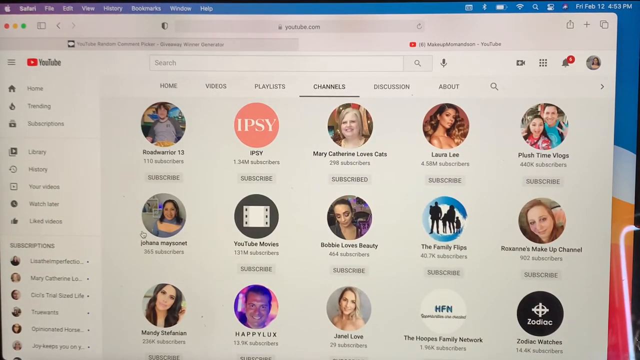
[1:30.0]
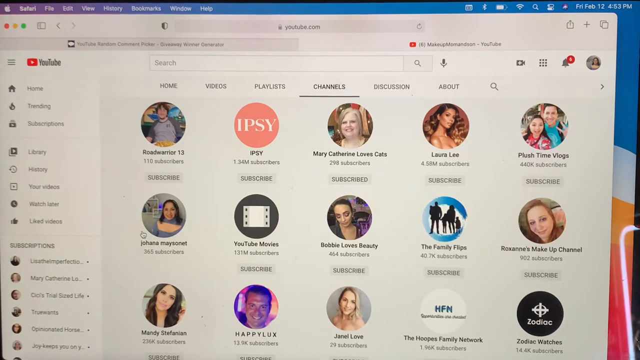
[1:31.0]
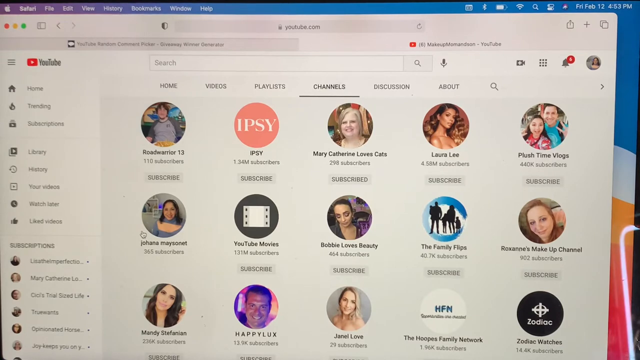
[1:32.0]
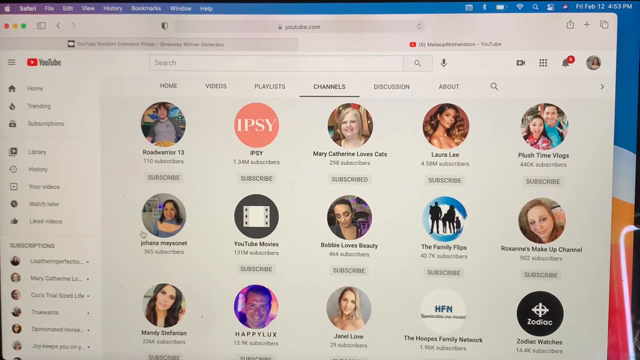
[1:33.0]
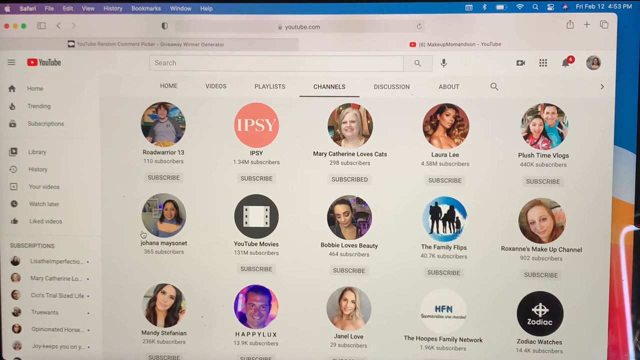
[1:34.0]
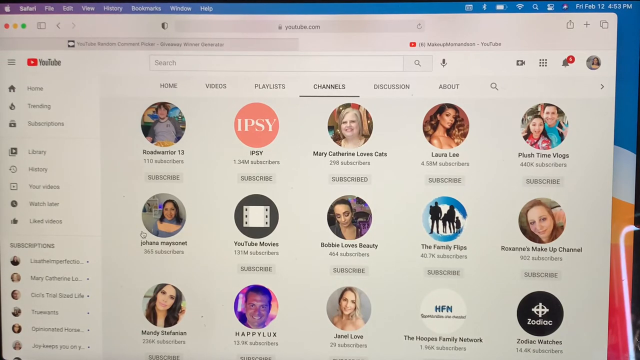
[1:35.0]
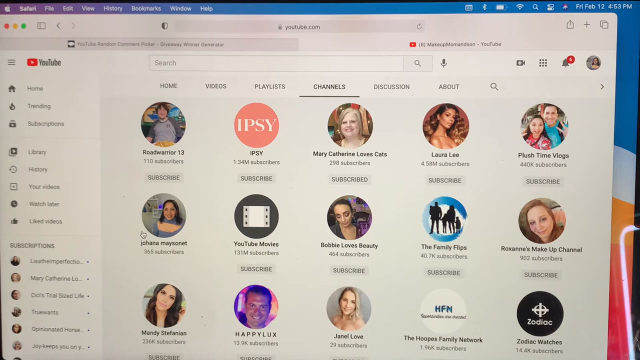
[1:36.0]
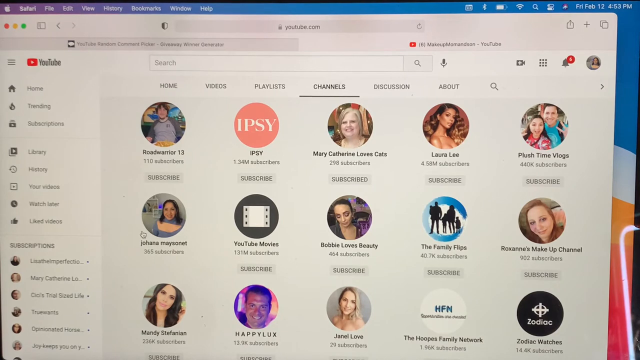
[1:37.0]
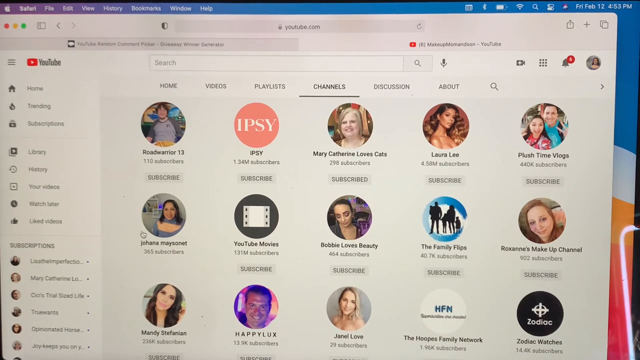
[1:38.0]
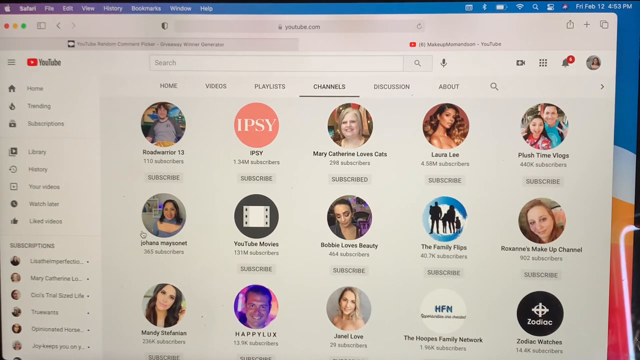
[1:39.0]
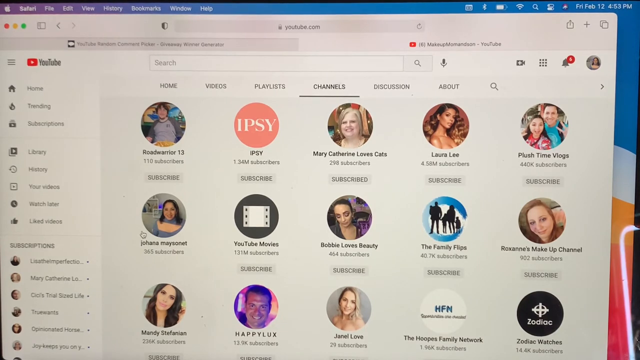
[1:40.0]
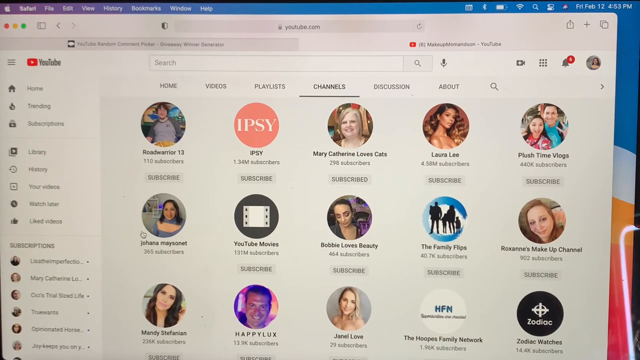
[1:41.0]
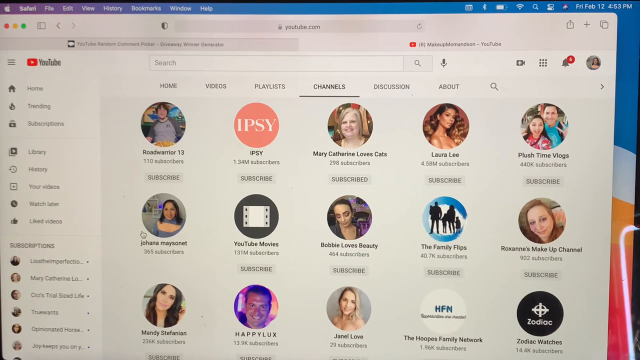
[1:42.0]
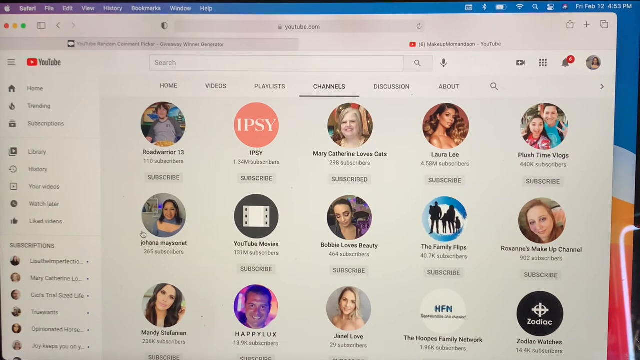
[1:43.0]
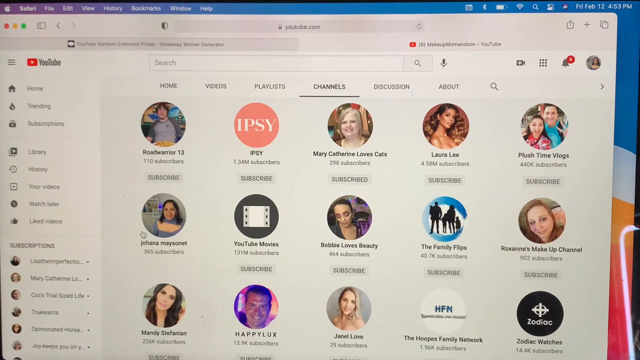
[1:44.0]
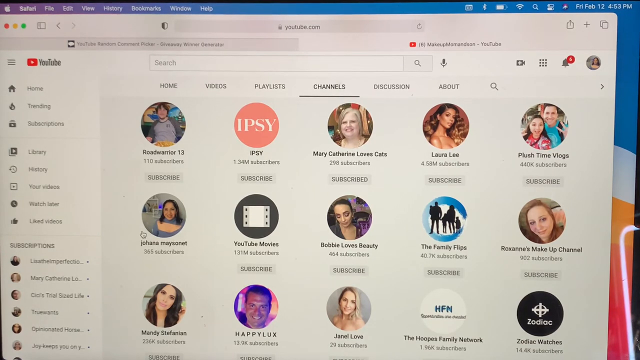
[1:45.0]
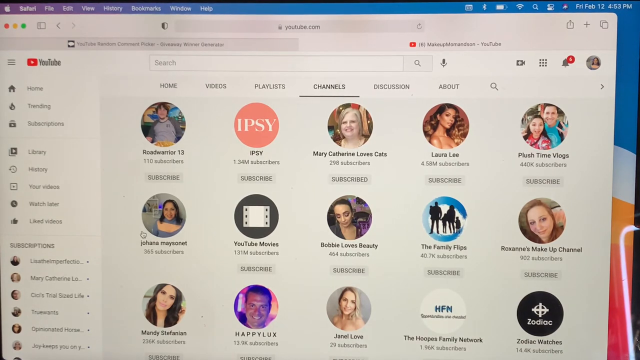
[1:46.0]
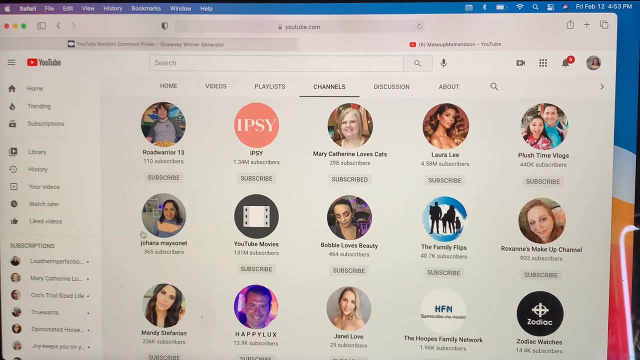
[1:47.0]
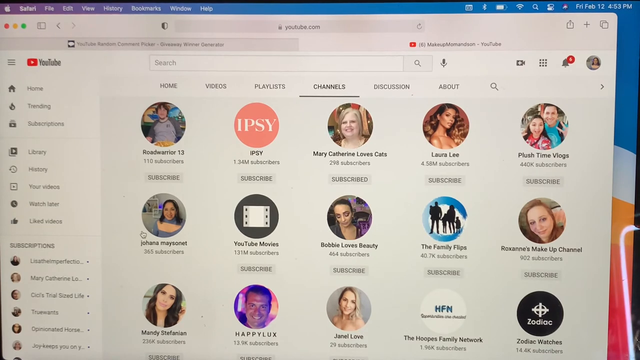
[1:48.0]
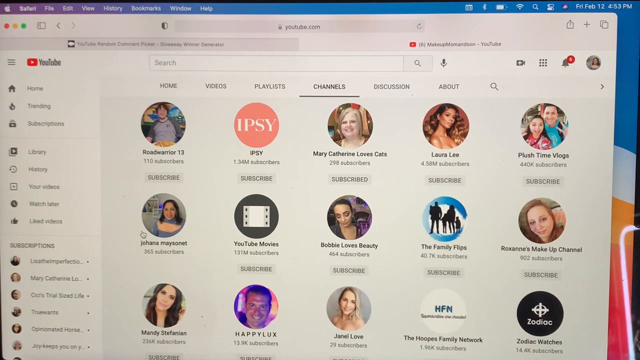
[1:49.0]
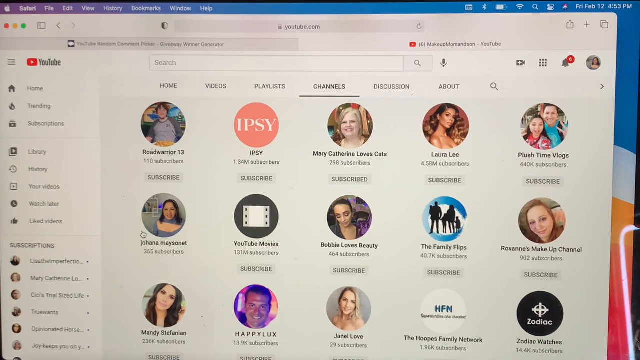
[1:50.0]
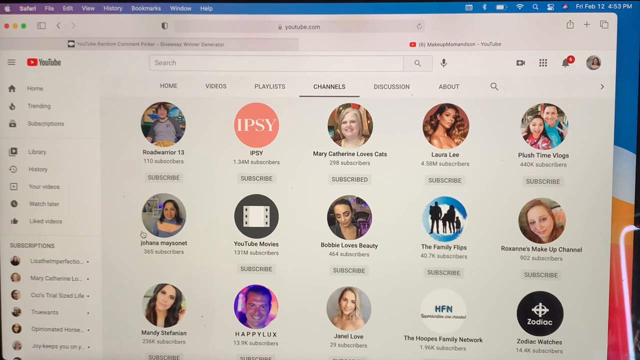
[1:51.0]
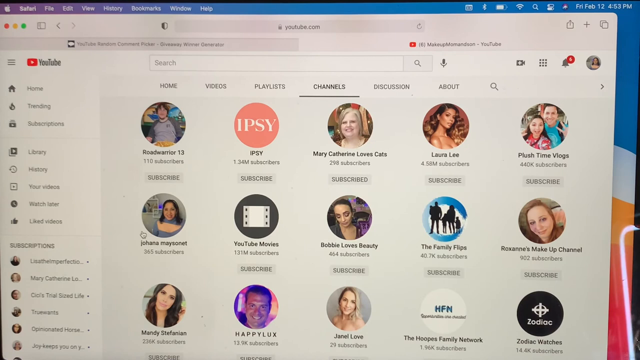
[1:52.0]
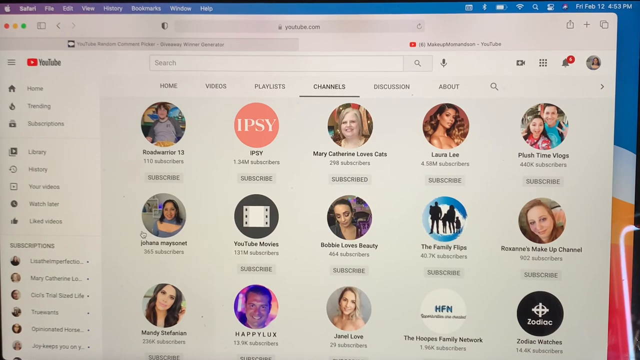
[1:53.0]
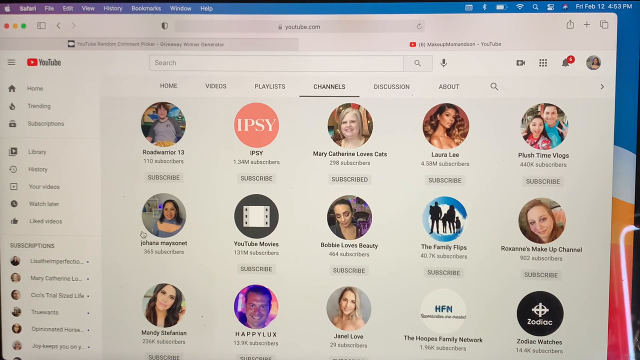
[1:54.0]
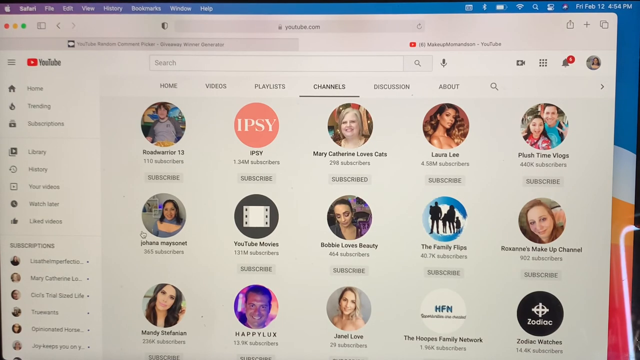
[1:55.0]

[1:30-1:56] A YouTube website is shown in what looks like an Apple browser: the Apple symbol and Apple navigation bar are at the top left, along with the red, yellow and green dots. Headers at the top of the page read Home, Videos, Playlists, Channels, Discussions and About. The Channels header is bolded and highlighted with a black underline, so the page appears to be under Channels. There appear to be 15 channels with circular avatars. On the left side, the mouse cursor hovers over one that reads "Johanna Maisonette," whose picture shows a woman looking toward the viewer in a purple dress. The cursor just keeps hovering there and nothing else happens.